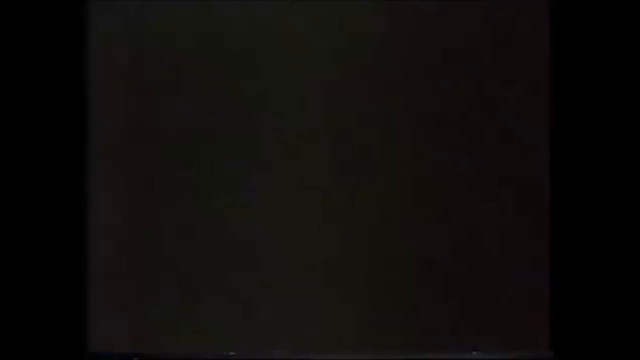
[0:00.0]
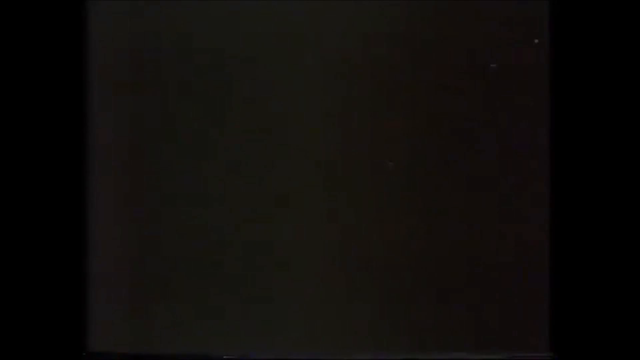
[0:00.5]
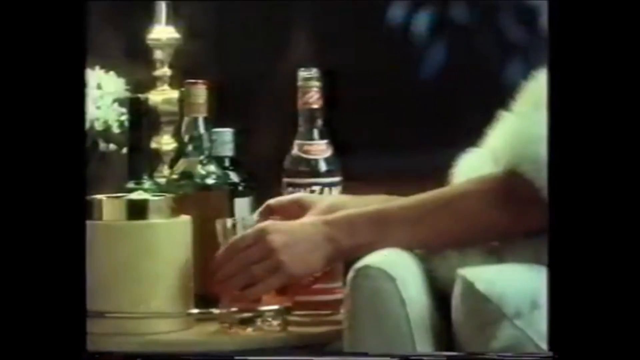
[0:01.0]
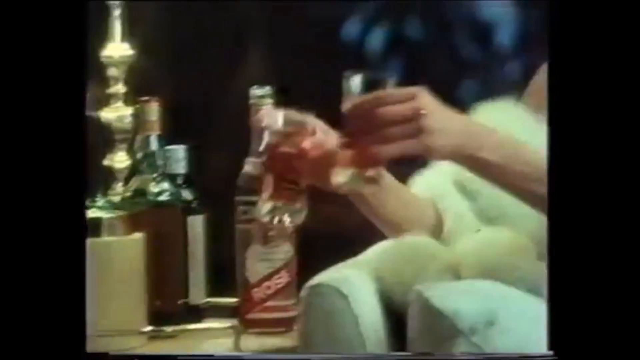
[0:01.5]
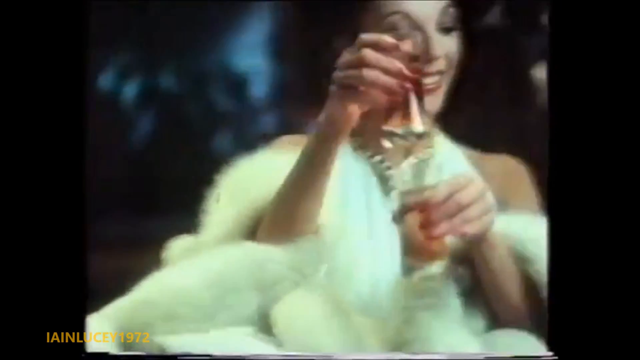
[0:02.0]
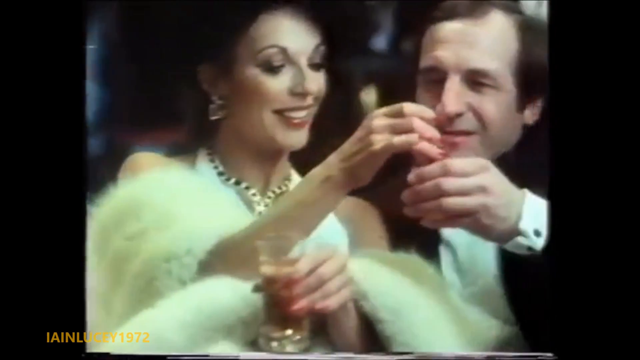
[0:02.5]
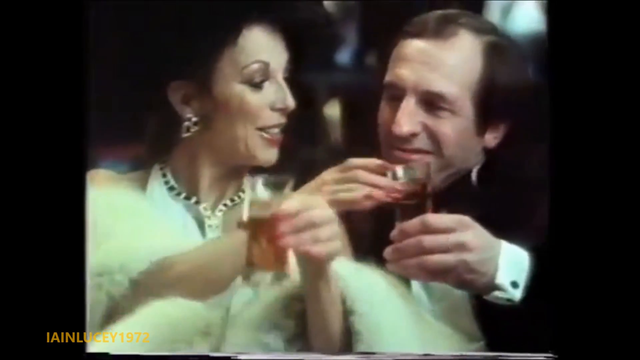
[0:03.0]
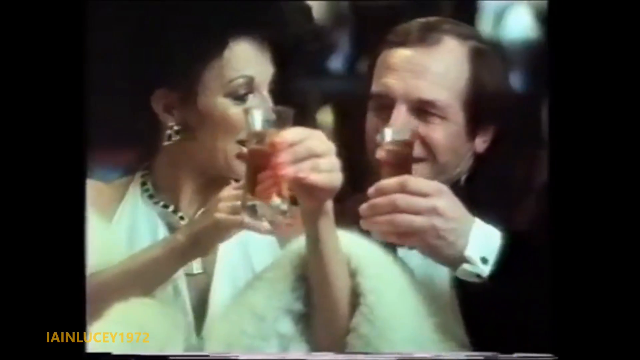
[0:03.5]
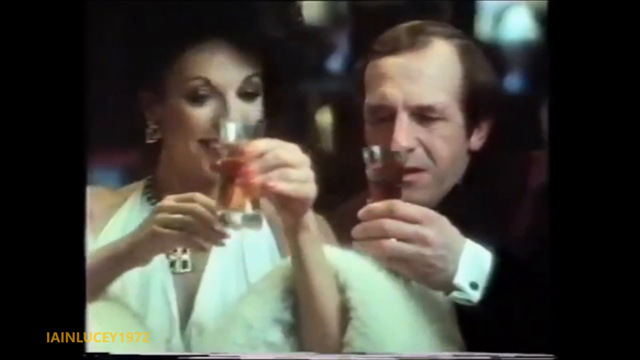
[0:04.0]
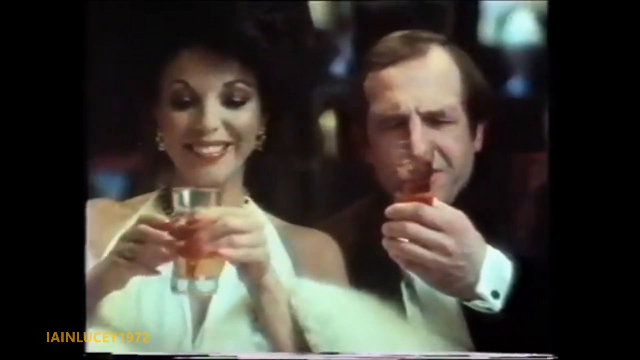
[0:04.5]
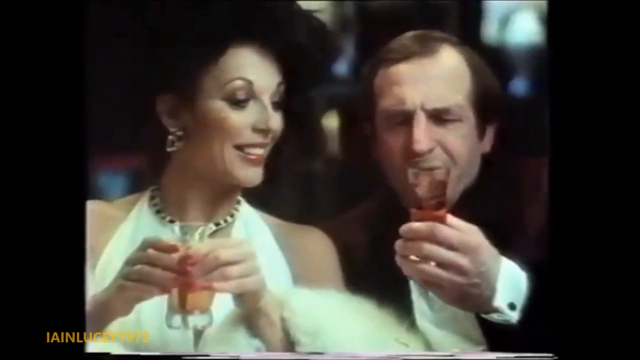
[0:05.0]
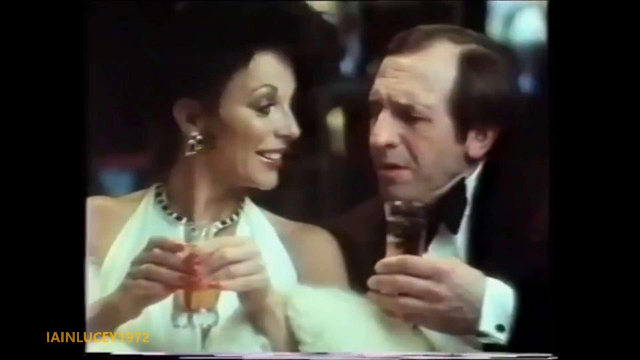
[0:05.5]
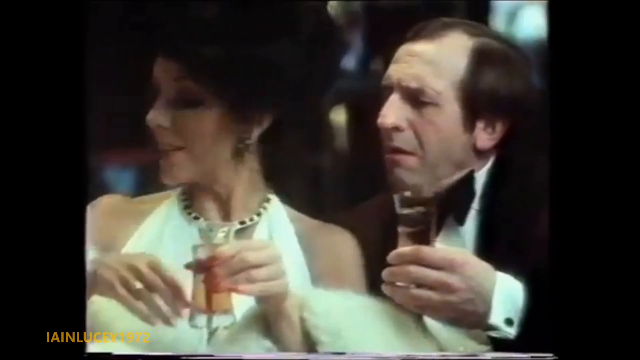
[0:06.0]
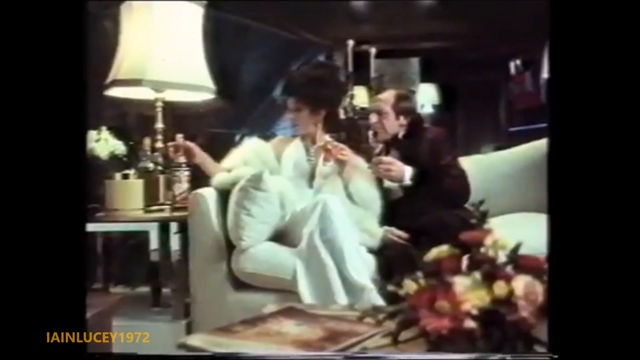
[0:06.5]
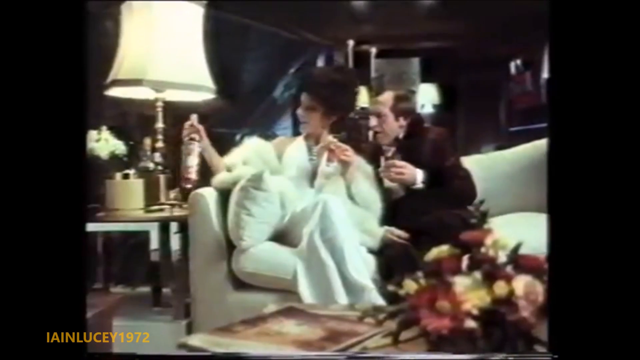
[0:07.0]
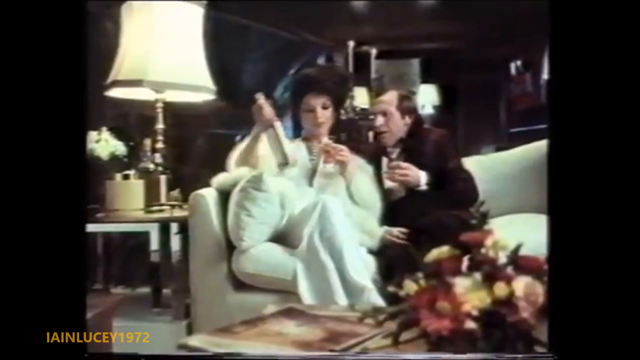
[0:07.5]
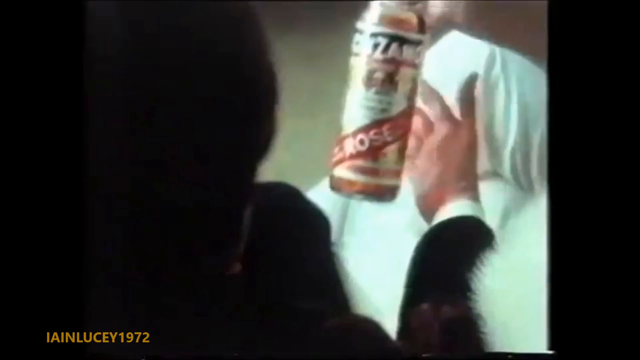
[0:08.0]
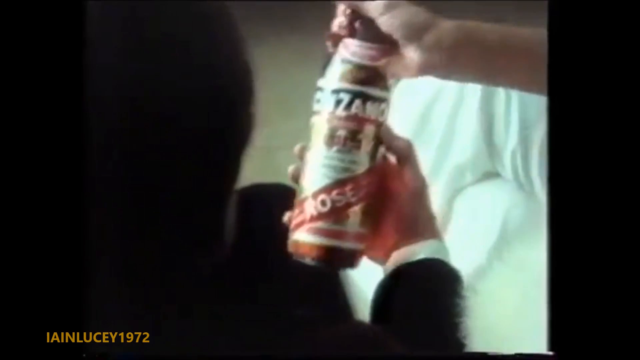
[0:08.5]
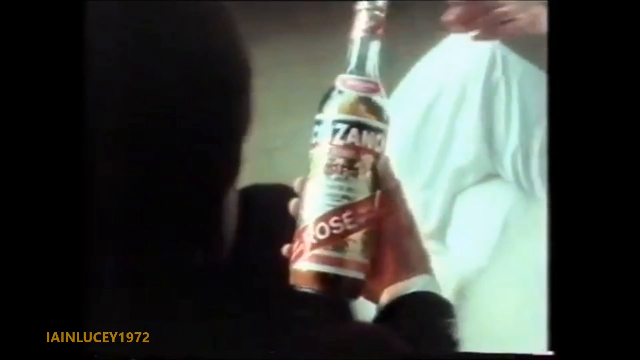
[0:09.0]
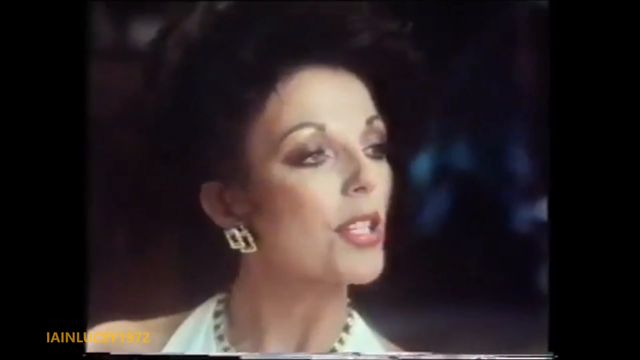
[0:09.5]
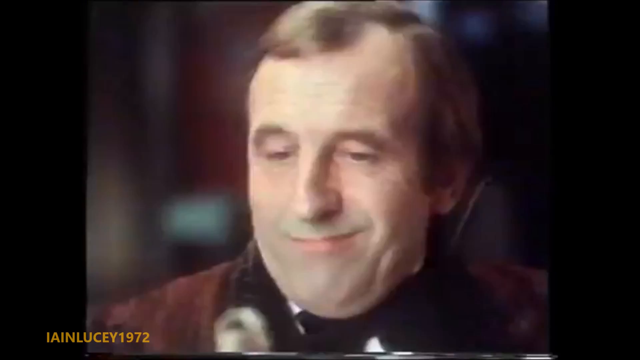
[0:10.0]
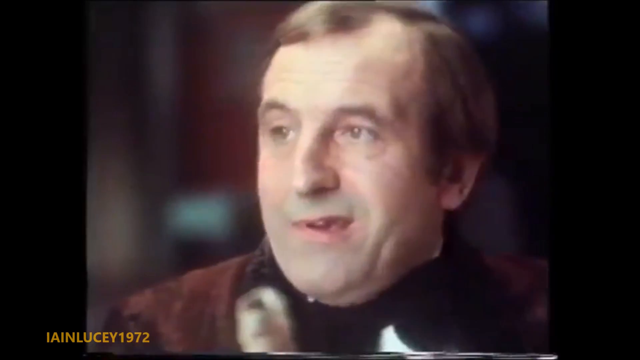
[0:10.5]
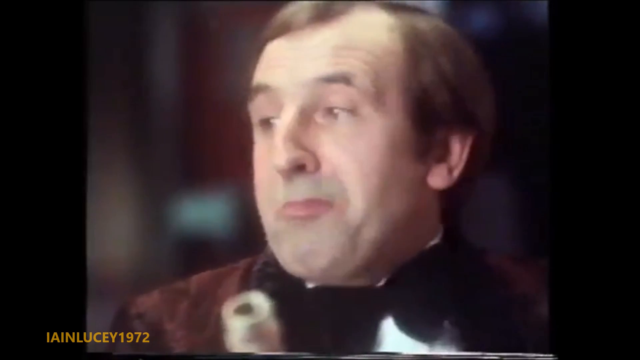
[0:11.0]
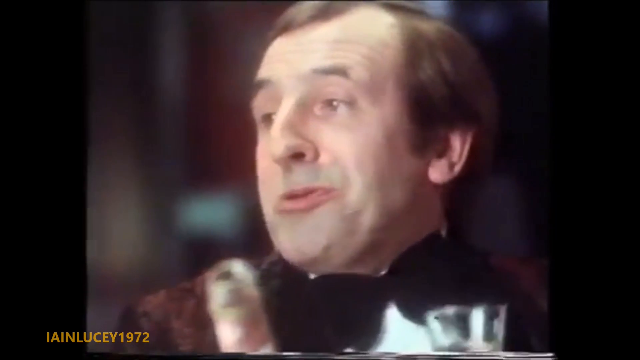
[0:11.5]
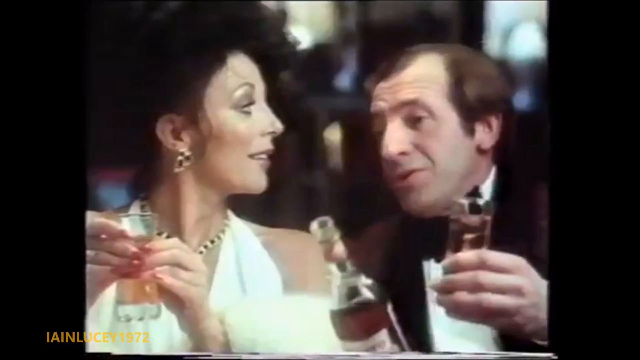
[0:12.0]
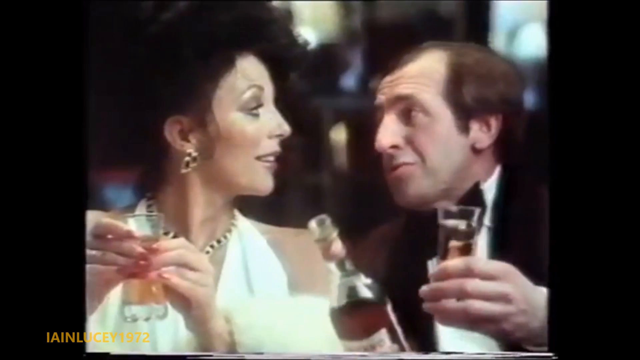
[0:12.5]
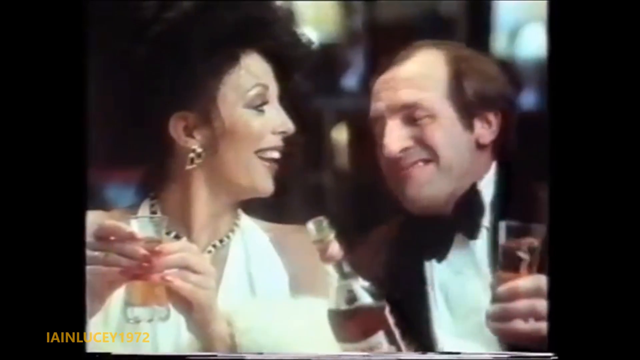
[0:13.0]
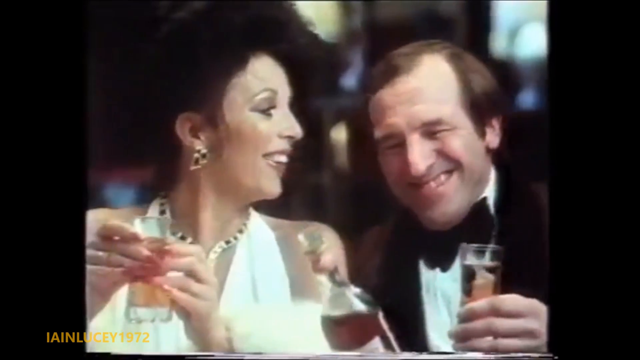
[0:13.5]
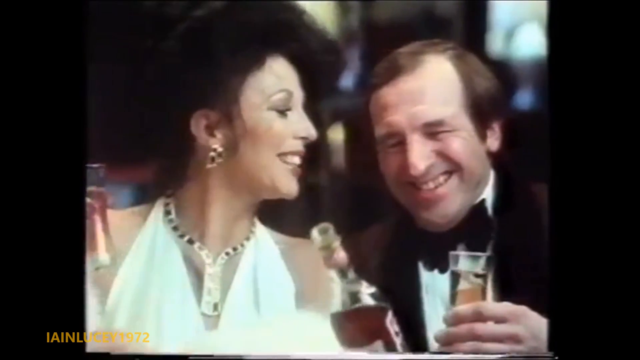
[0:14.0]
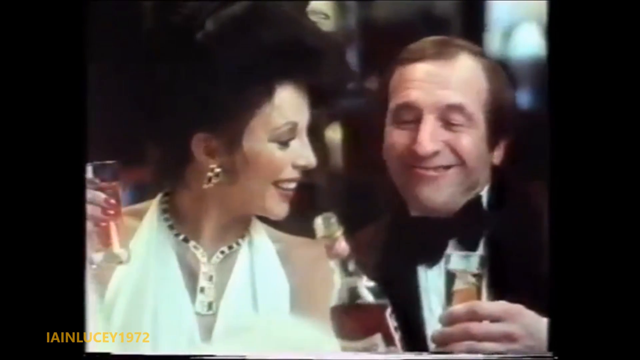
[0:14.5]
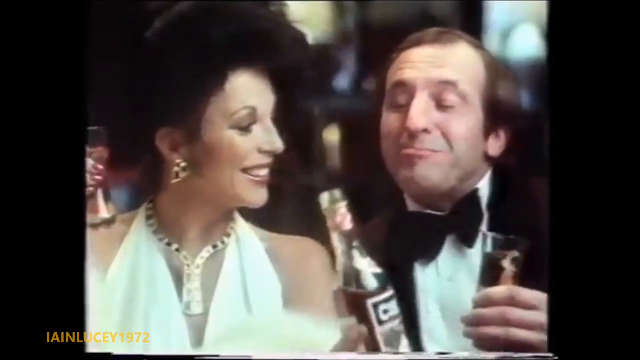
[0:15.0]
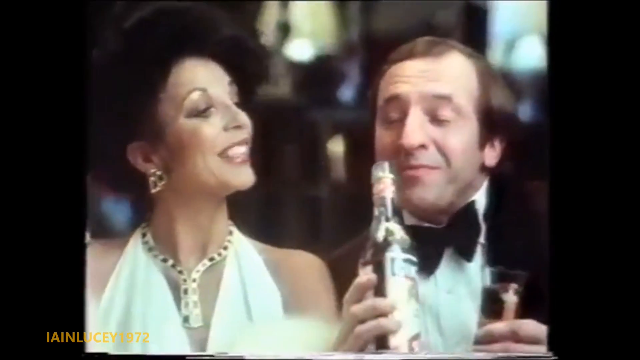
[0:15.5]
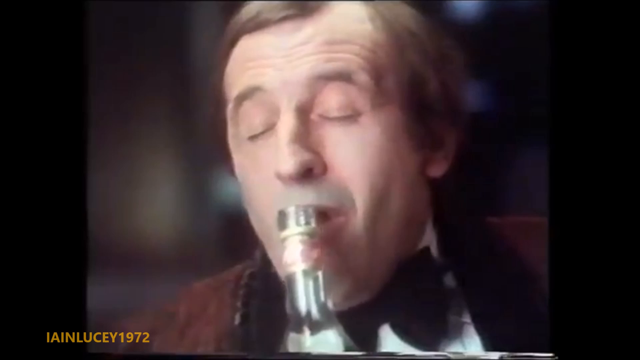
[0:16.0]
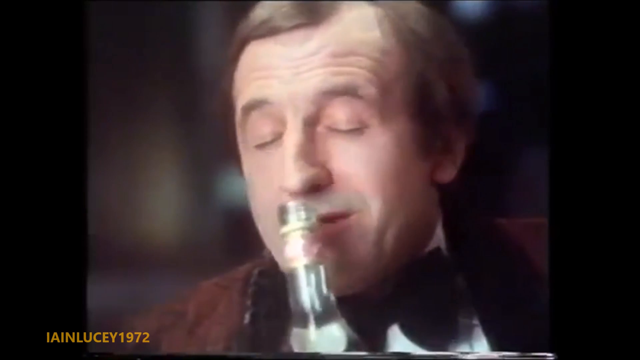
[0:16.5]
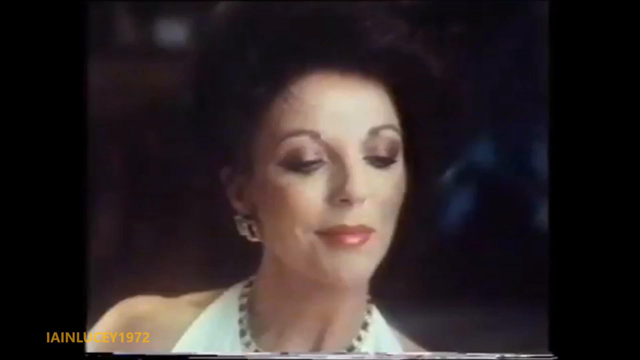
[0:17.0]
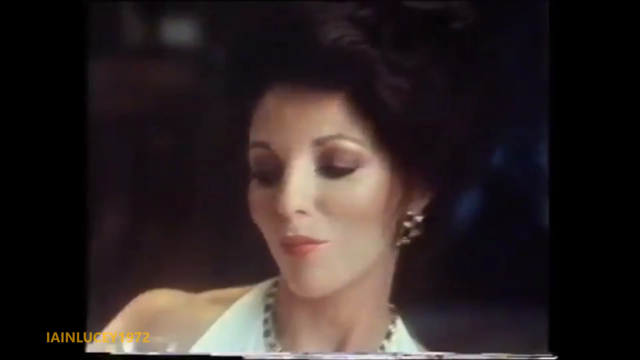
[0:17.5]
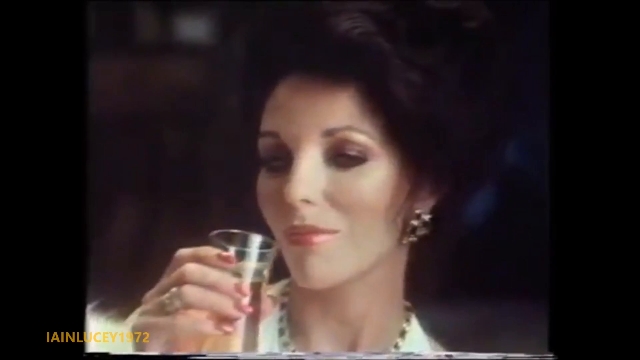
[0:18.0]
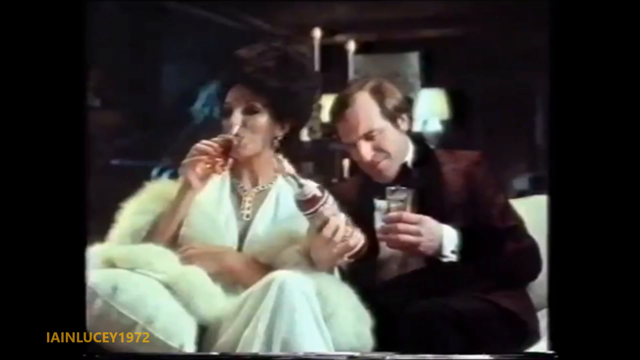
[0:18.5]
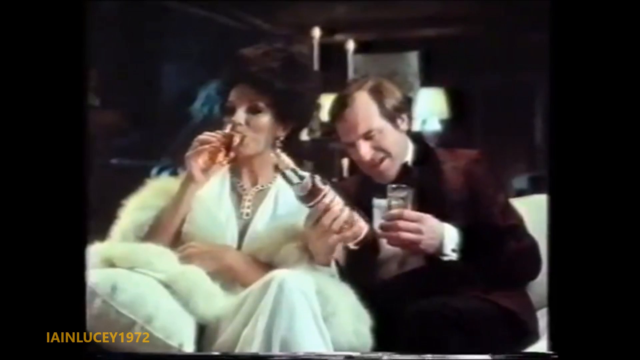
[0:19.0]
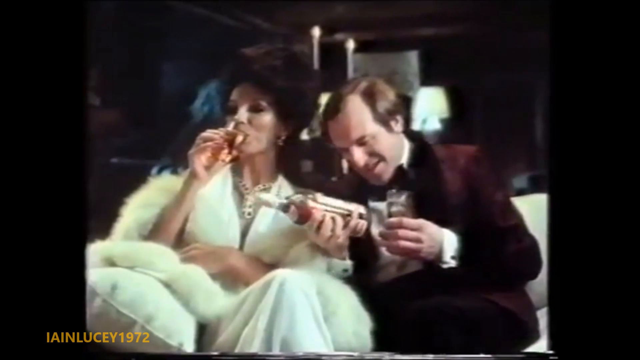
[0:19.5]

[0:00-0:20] A woman wearing a white fur coat is seated and smiling. She has two glass cups in her hand, taken from a table, and hands one of them to a man wearing a tuxedo with a white shirt underneath and black cufflinks. The woman wears earrings and a necklace. She hands the other glass cup to the man, and, all smiles, holds a glass cup with both hands. The man takes a sip from his cup. The video zooms out to show that he is sitting on a white couch. There is a table next to the woman and next to the couch, with a lamp stand on it; the light is switched on. The woman takes a bottle from the table and hands it to the man. The woman talks with the man as he laughs and smells the contents of the bottle. She lifts the glass cup in her hand to her mouth and takes a sip of her drink.